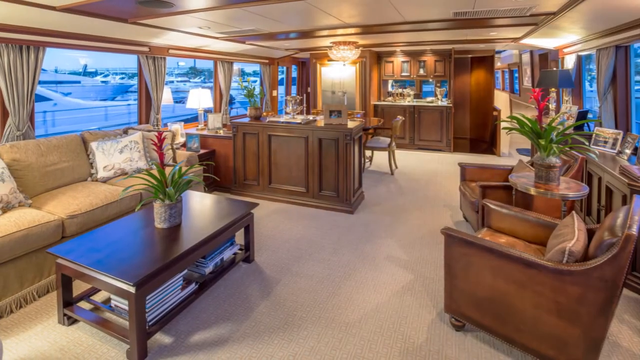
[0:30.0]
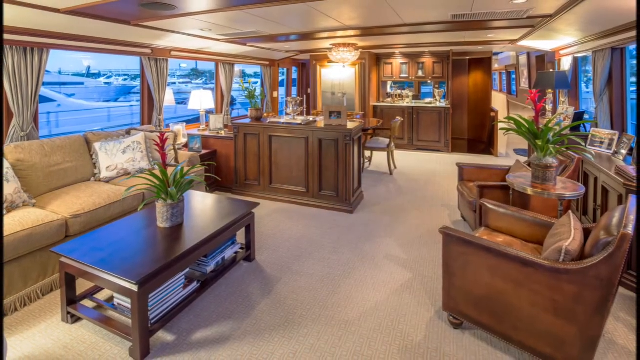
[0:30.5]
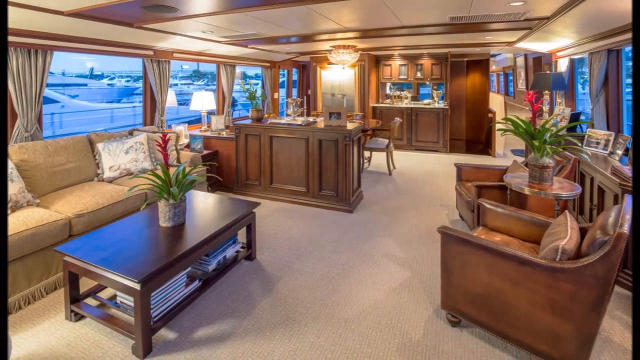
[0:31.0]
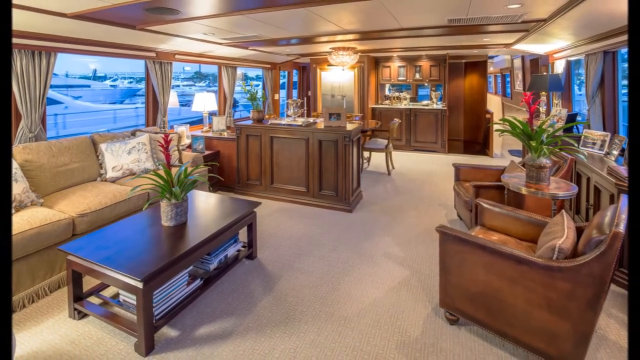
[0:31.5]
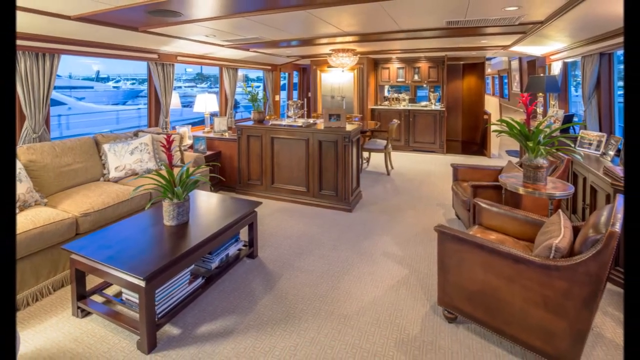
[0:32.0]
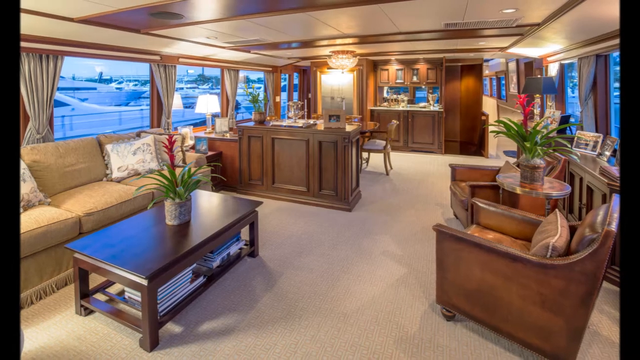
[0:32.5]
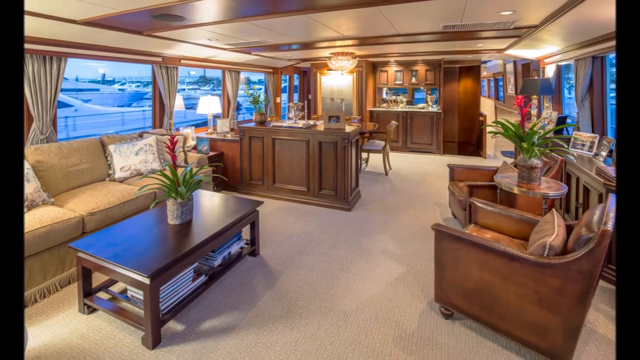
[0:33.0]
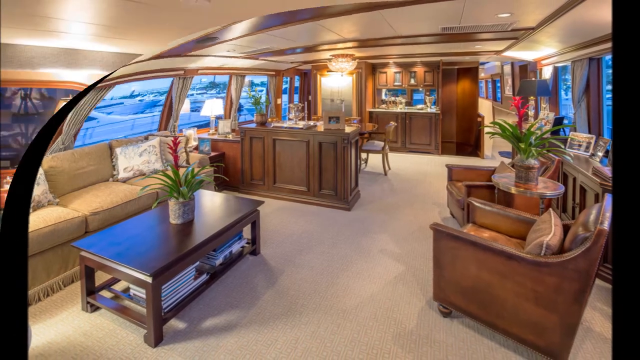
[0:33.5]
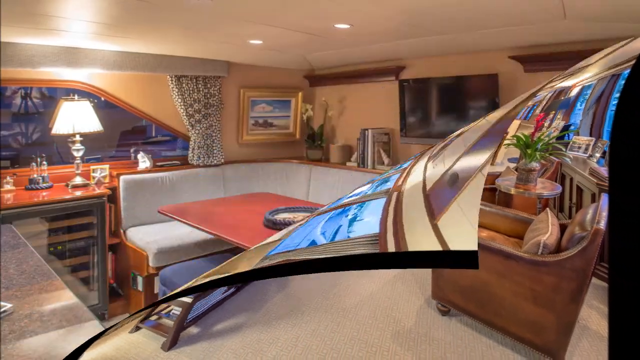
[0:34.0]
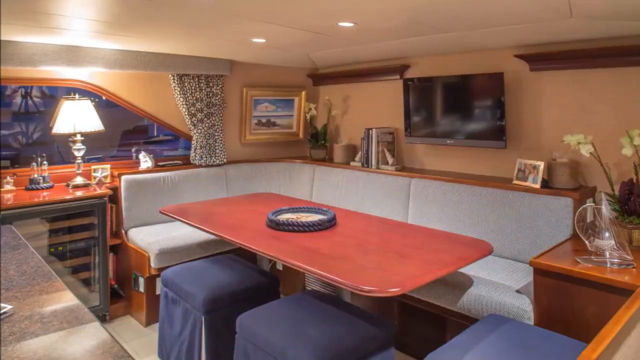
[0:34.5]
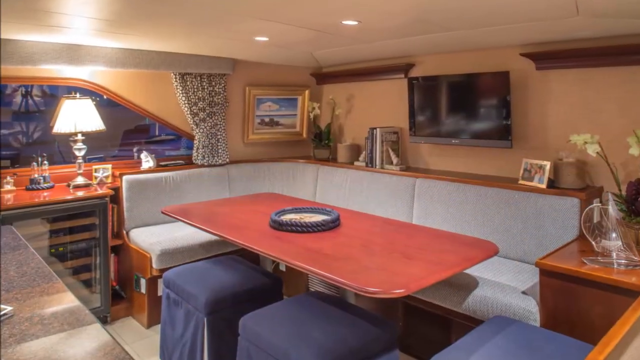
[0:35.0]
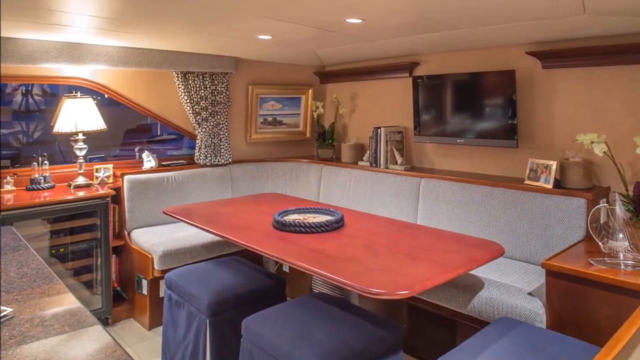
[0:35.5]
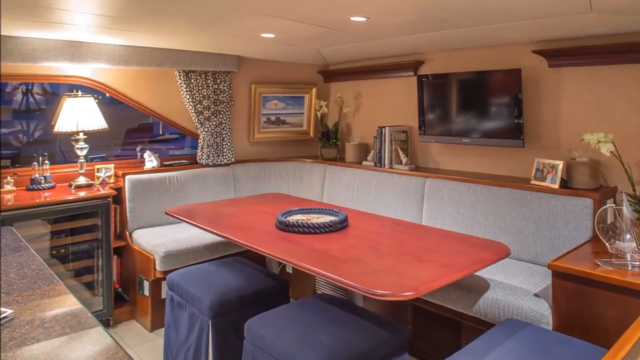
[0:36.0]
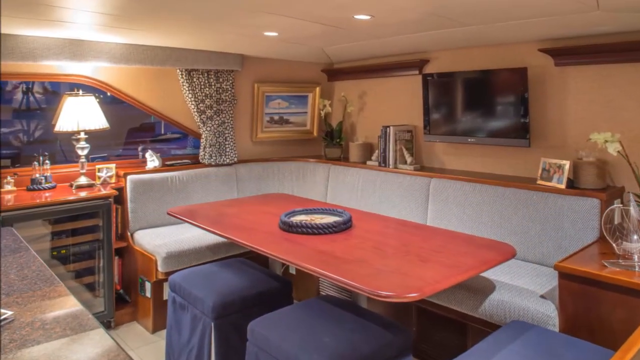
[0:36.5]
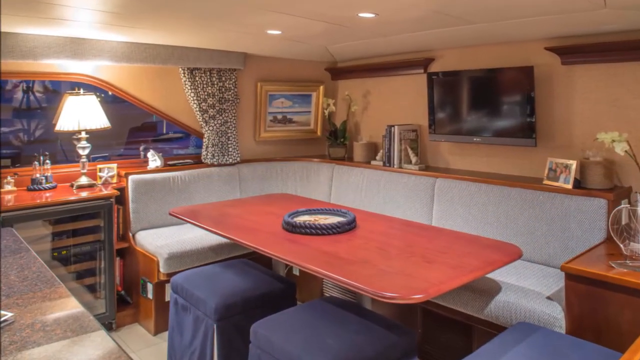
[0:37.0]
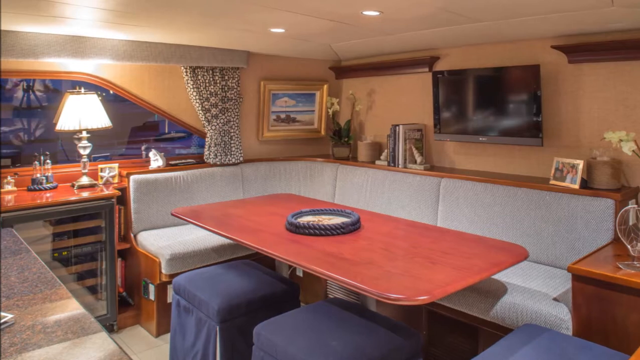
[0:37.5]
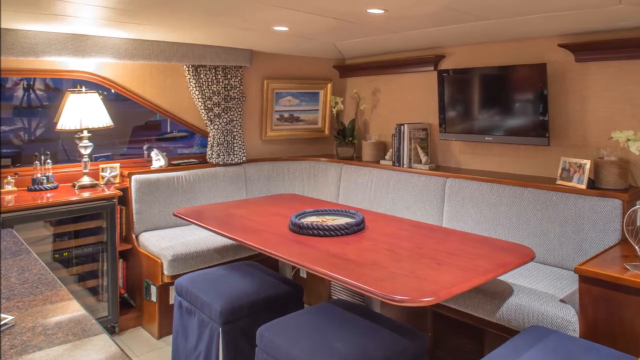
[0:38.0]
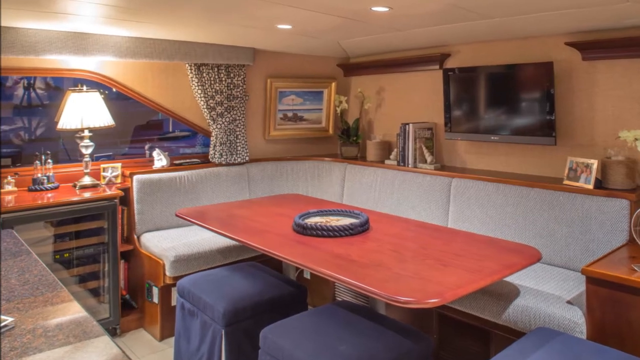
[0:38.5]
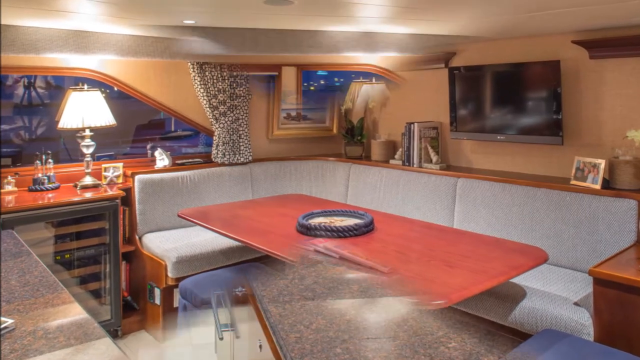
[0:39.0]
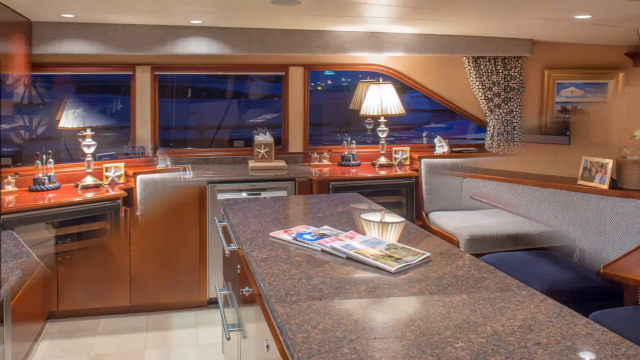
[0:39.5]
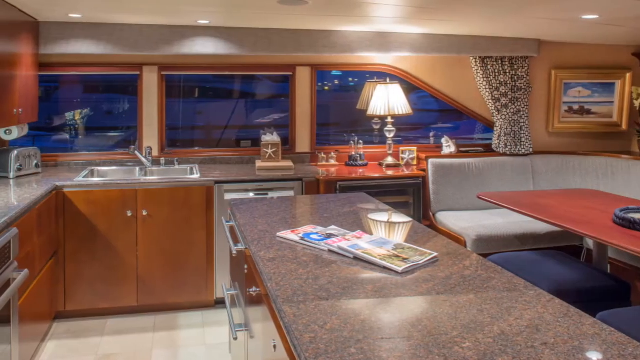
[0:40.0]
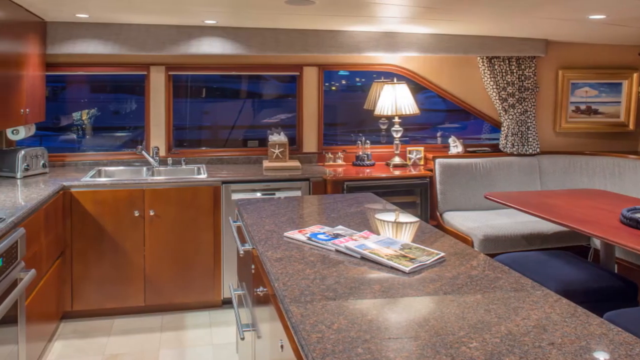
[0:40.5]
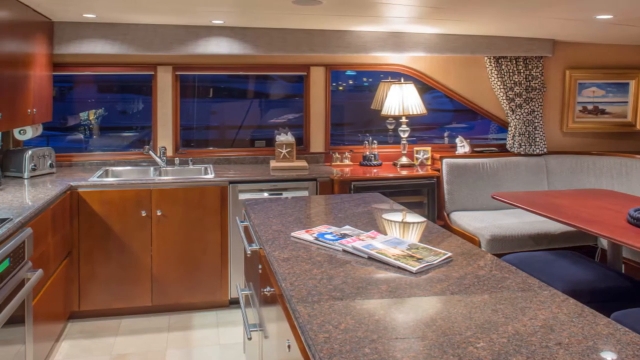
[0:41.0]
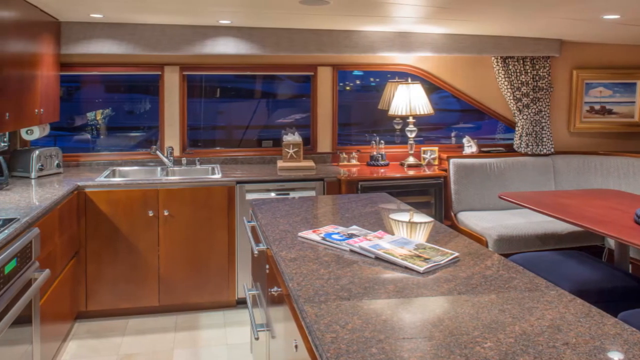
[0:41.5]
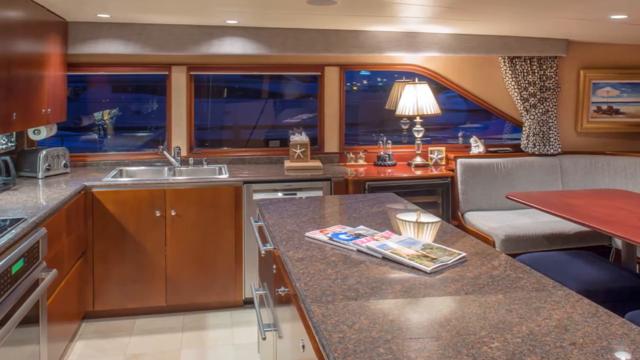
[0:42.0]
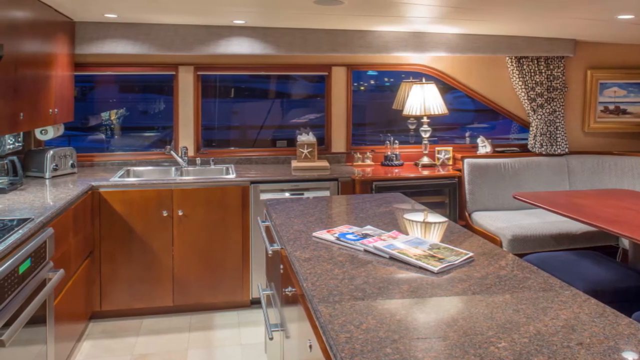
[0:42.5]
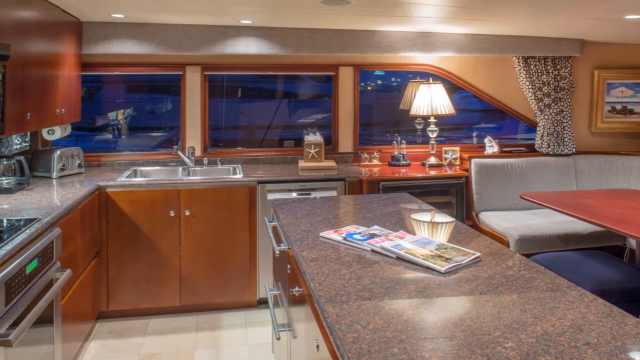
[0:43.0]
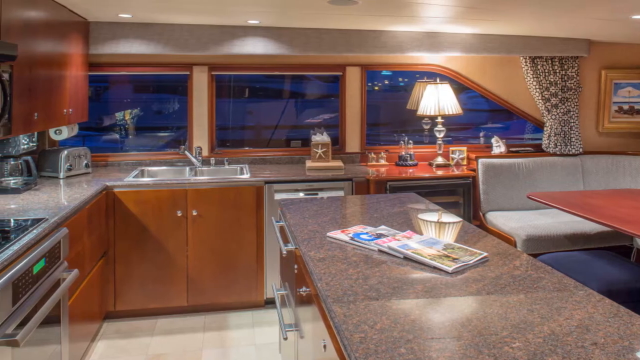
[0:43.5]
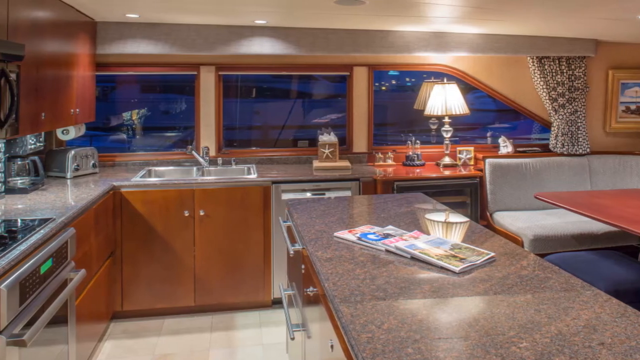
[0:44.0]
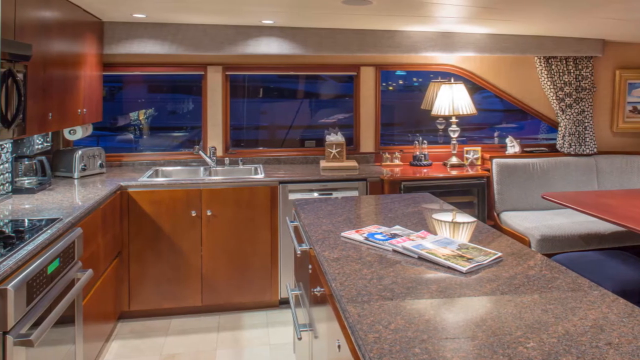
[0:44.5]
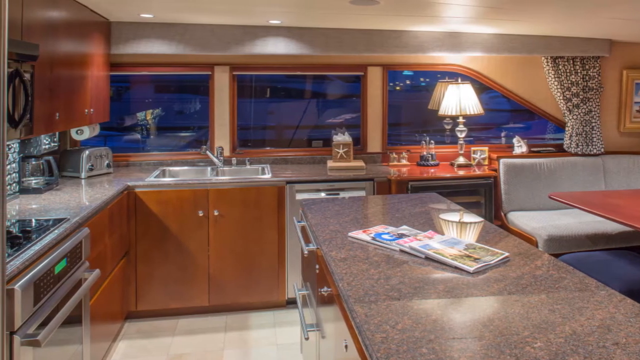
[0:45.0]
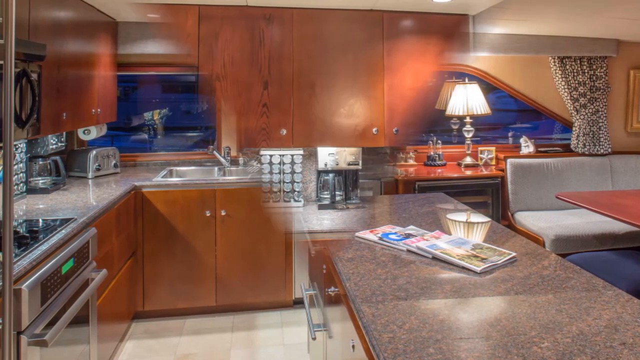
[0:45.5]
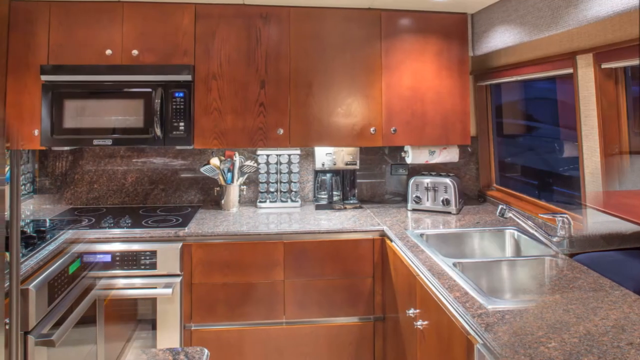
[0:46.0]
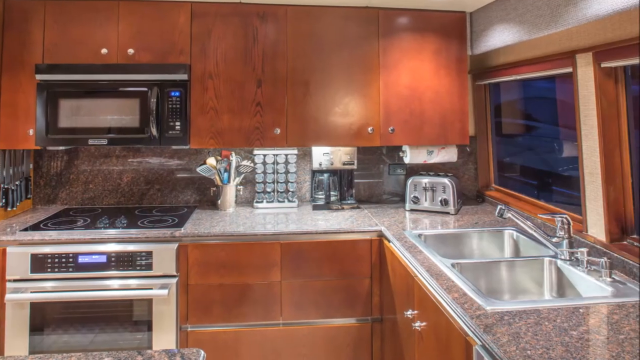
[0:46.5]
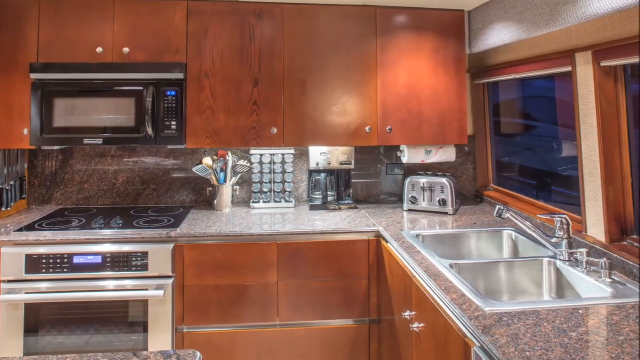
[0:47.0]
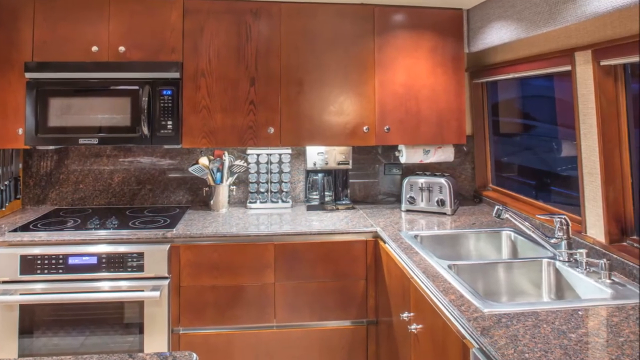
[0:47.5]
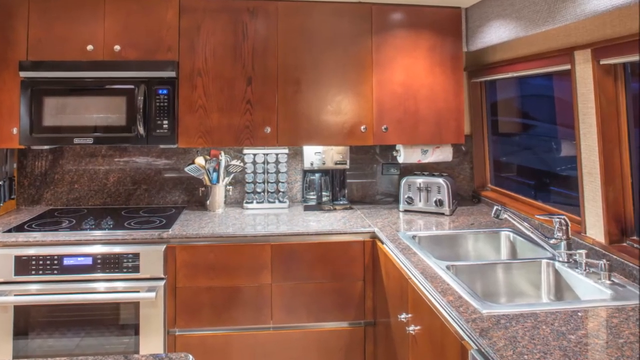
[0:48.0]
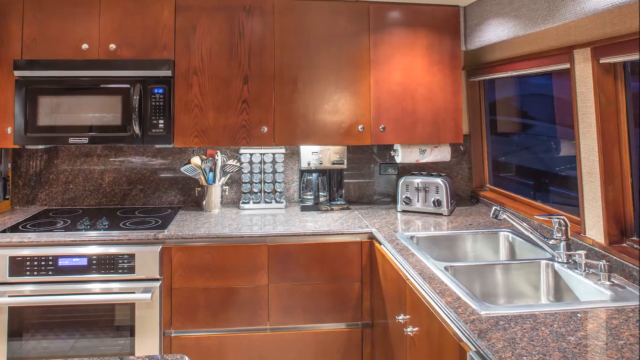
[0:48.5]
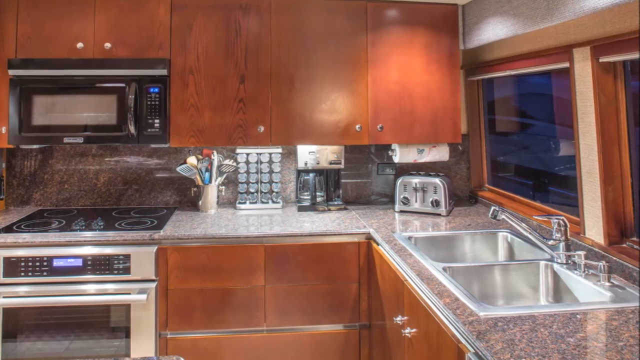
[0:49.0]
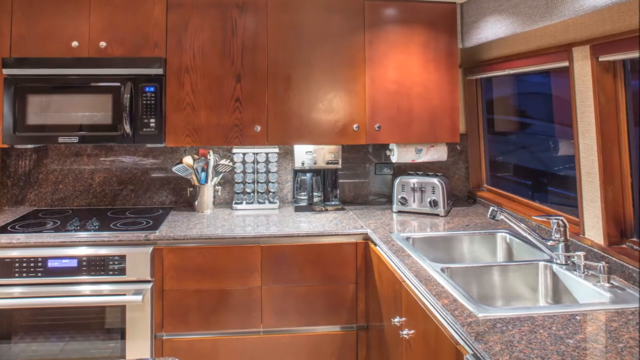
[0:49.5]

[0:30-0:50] Another interior room appears to be an entertainment room. It has diner-like seating with white cushions and a long table that looks like it is made of cherry wood, with rounded corners. Two black stools are next to the seating area, and a mounted TV is in the background. The seating has a shelf with portraits, a few books and other home decor such as small plants on top. The view then changes to the other side of the room, showing a small, narrow kitchen with a kitchen island. There is a double-basin stainless steel sink with about three window panels behind it, a small beverage refrigerator, a stove oven and an electric induction range with a microwave above it. The kitchen countertop looks like it is made of granite.